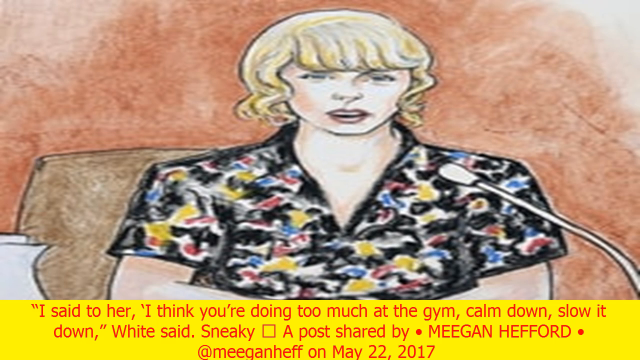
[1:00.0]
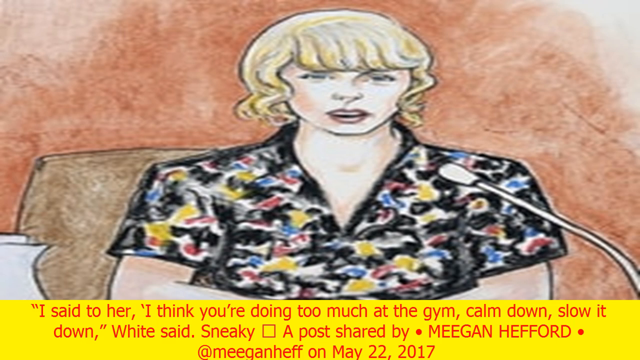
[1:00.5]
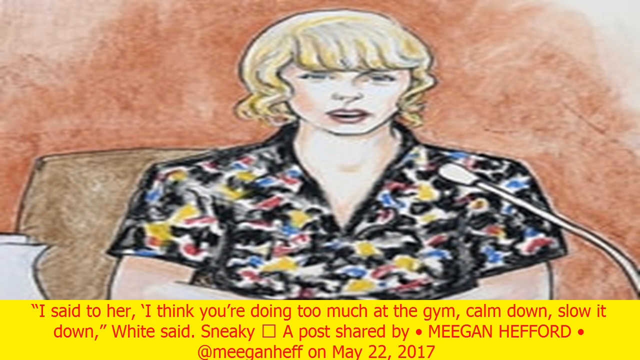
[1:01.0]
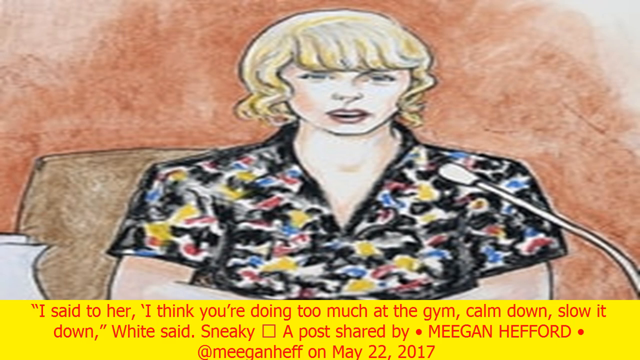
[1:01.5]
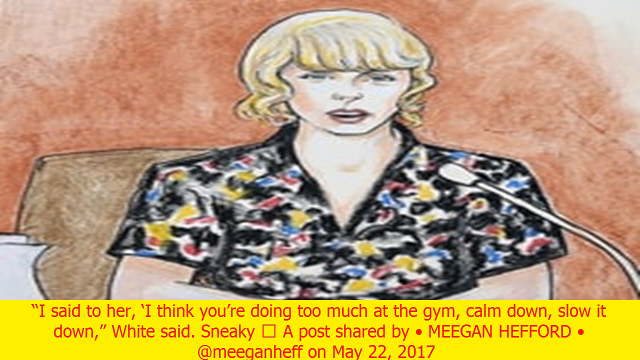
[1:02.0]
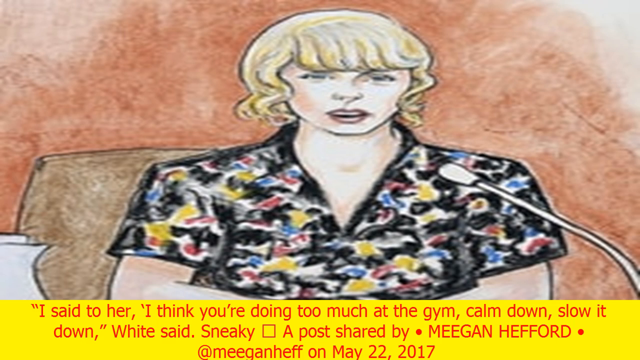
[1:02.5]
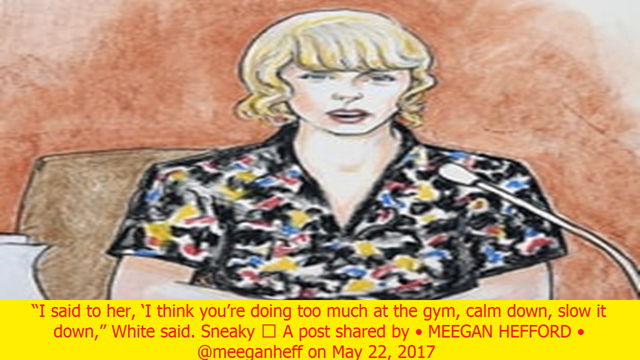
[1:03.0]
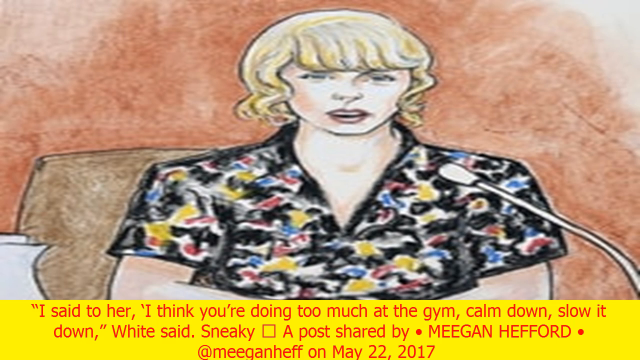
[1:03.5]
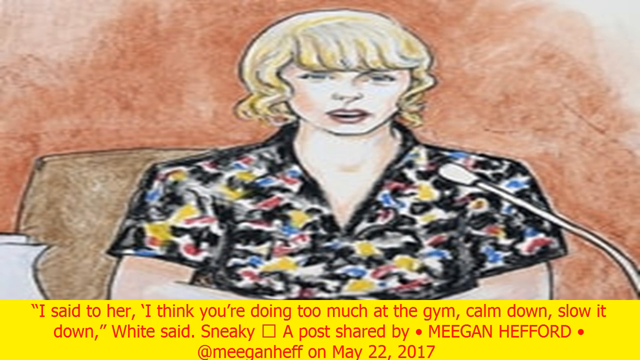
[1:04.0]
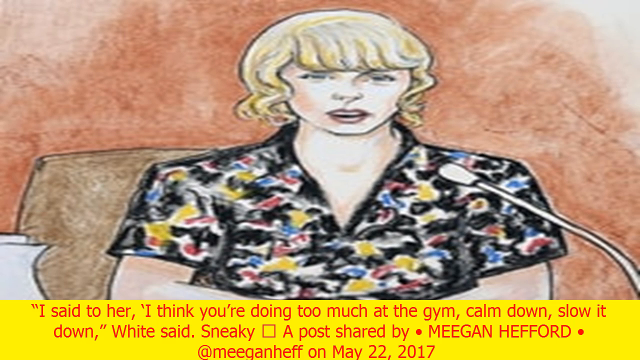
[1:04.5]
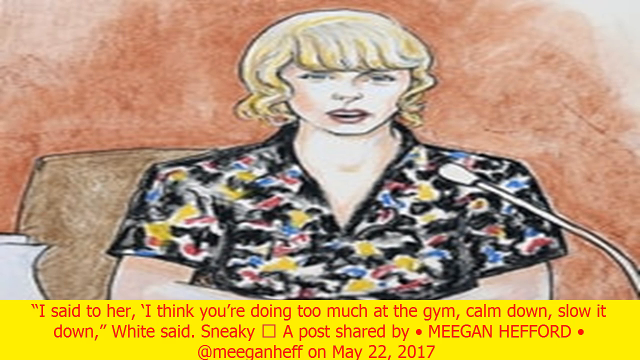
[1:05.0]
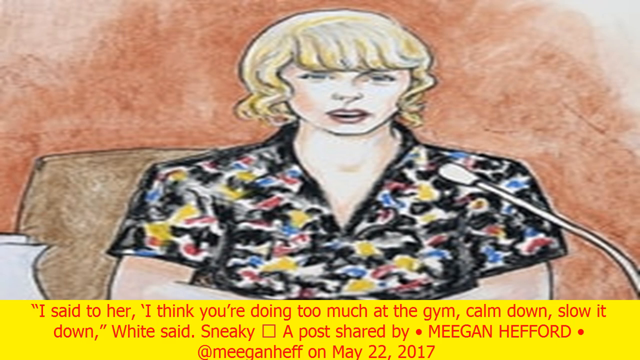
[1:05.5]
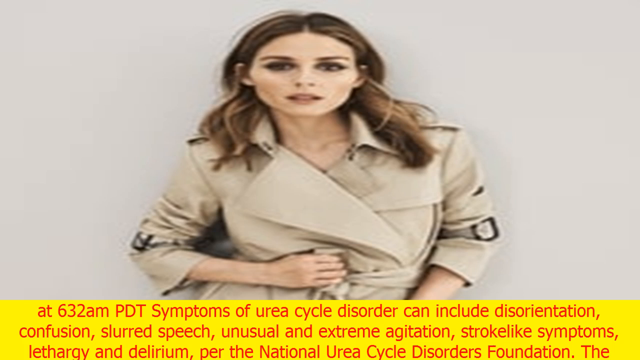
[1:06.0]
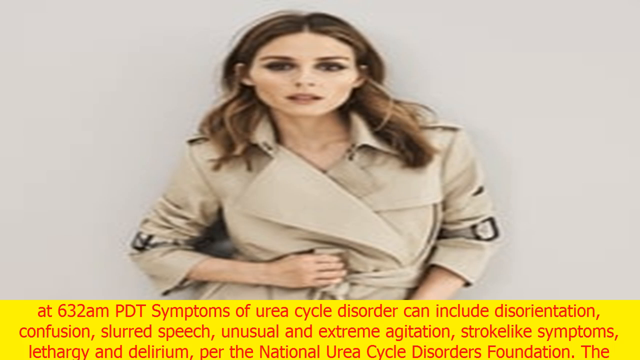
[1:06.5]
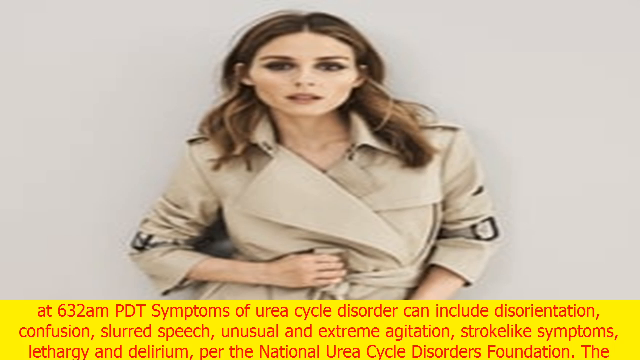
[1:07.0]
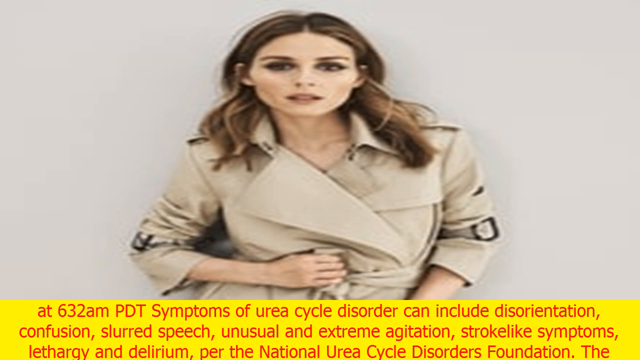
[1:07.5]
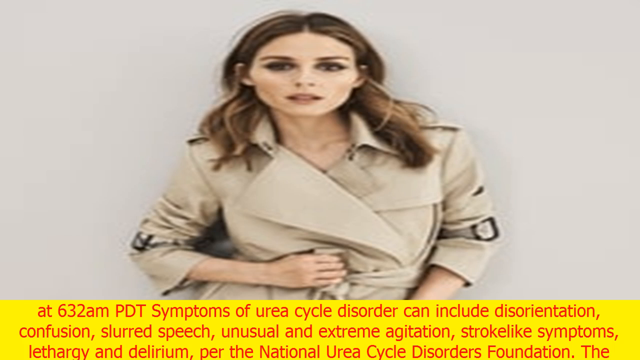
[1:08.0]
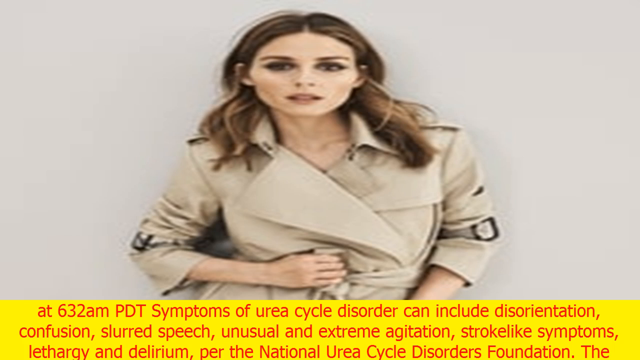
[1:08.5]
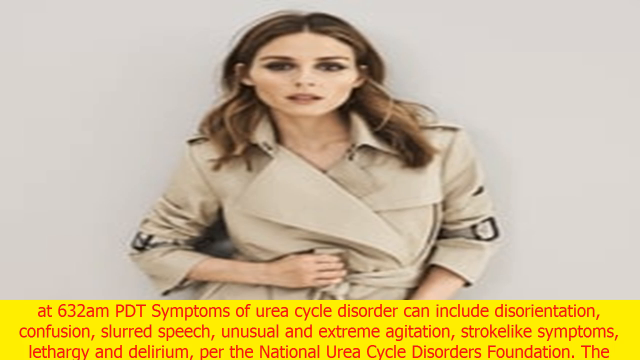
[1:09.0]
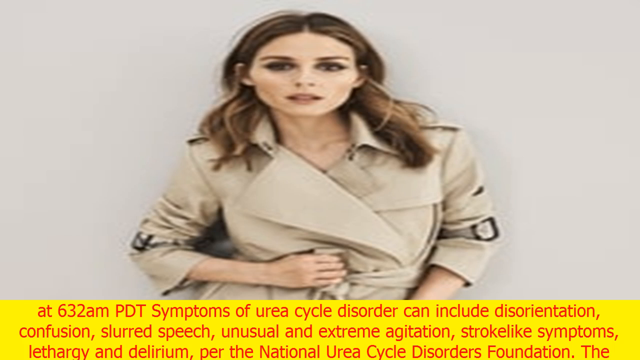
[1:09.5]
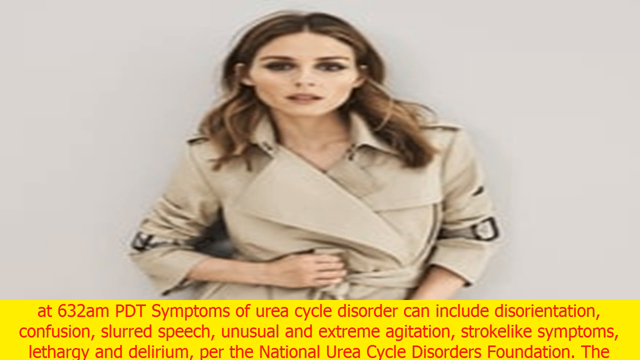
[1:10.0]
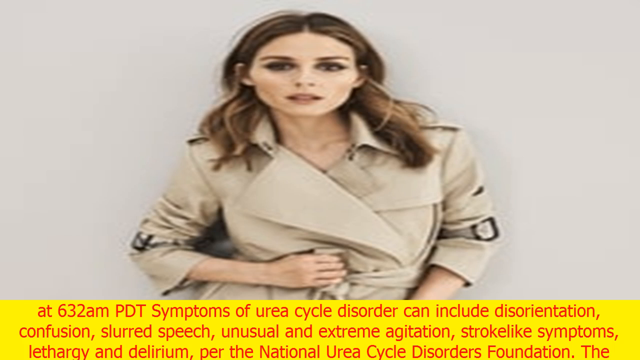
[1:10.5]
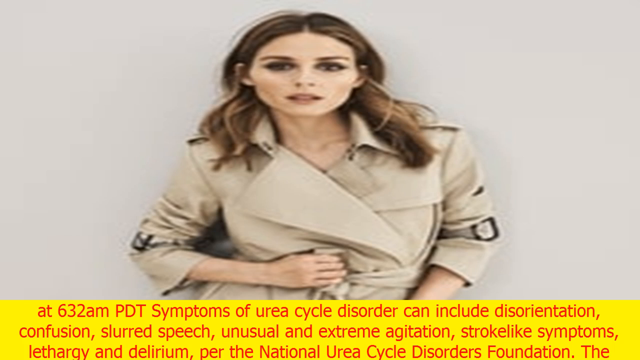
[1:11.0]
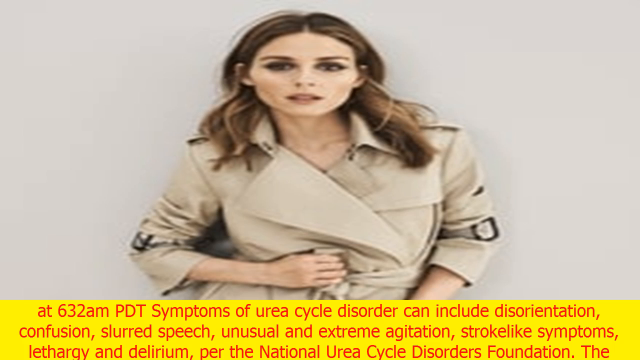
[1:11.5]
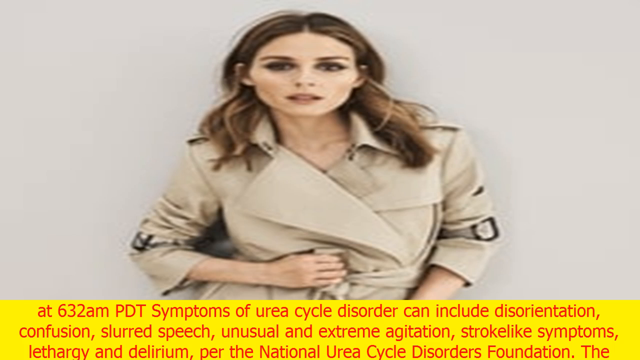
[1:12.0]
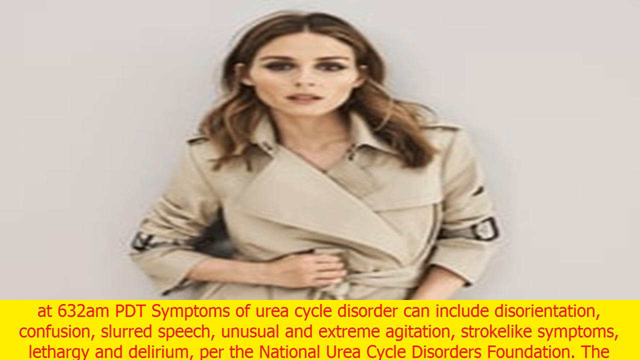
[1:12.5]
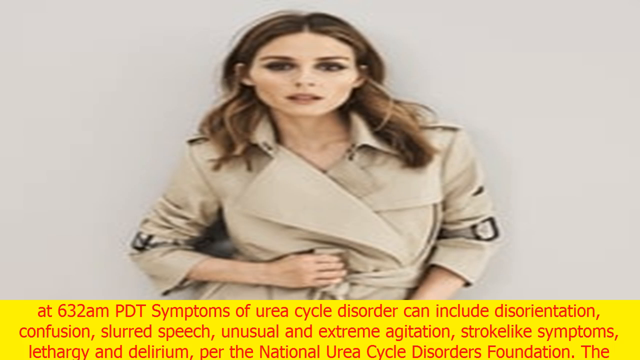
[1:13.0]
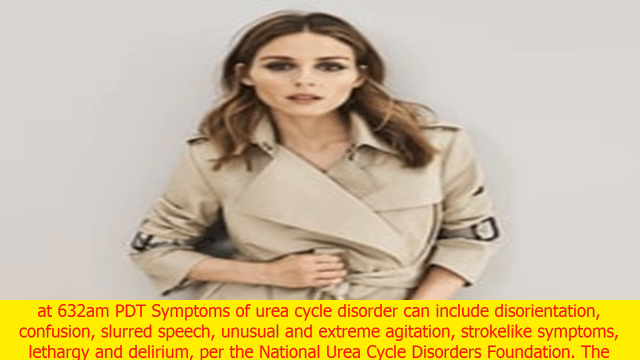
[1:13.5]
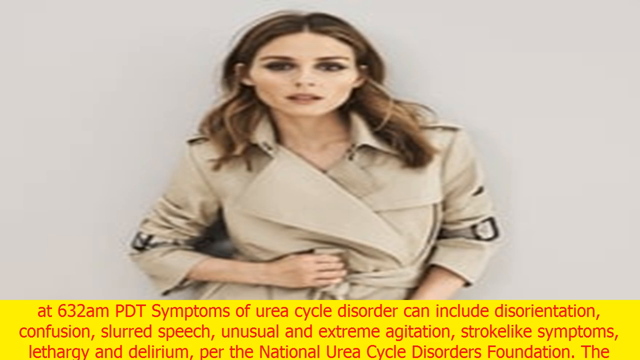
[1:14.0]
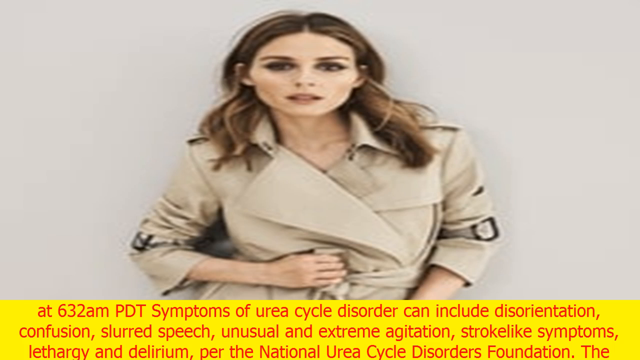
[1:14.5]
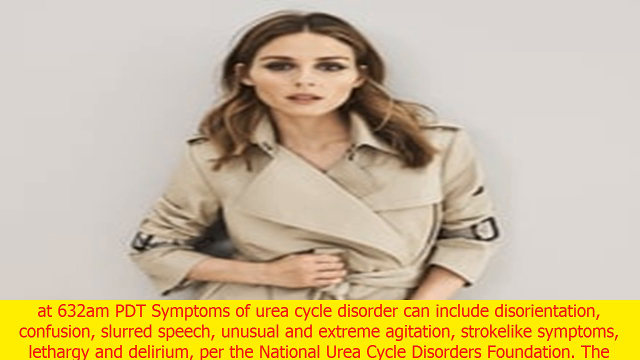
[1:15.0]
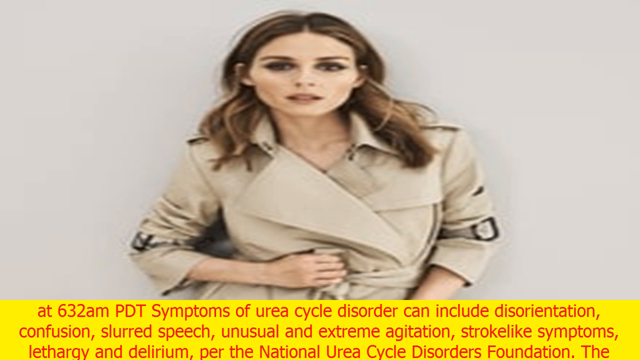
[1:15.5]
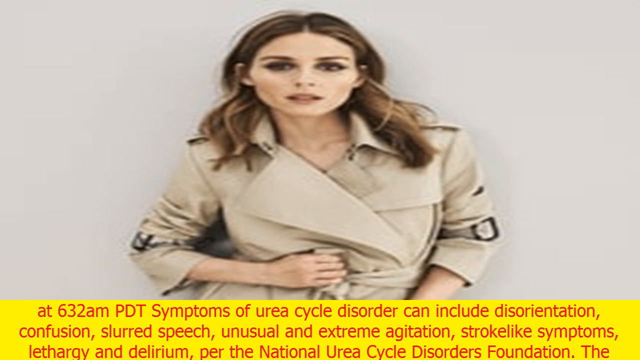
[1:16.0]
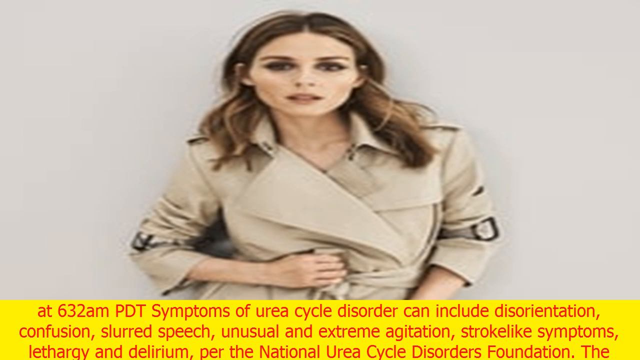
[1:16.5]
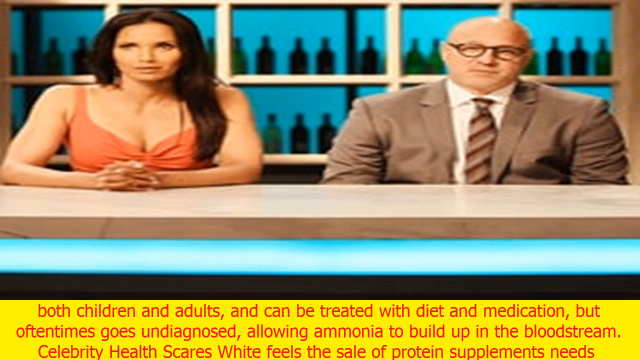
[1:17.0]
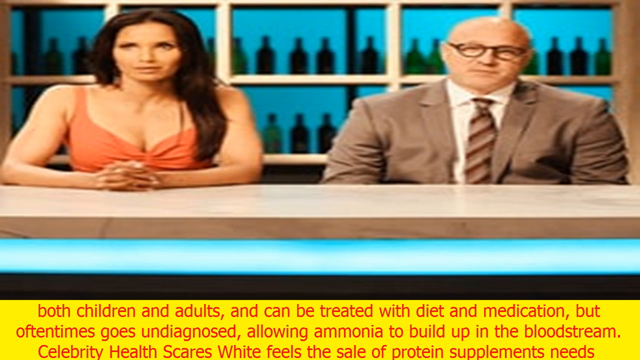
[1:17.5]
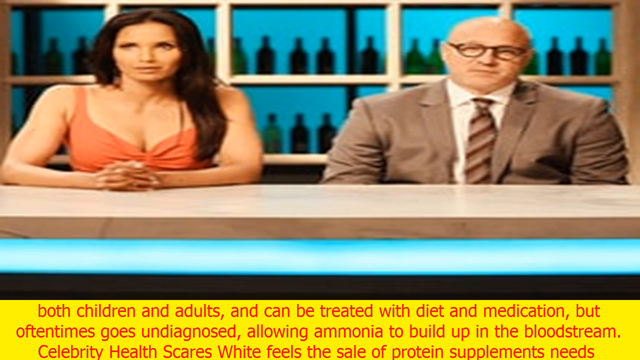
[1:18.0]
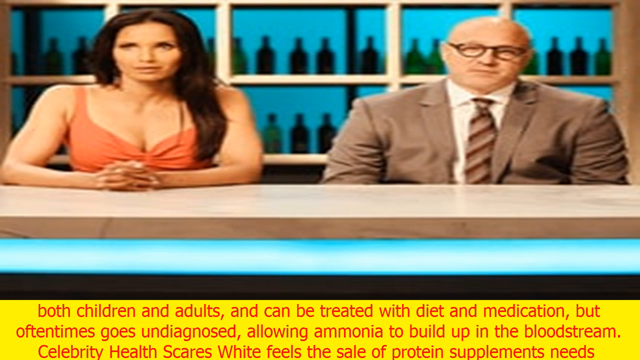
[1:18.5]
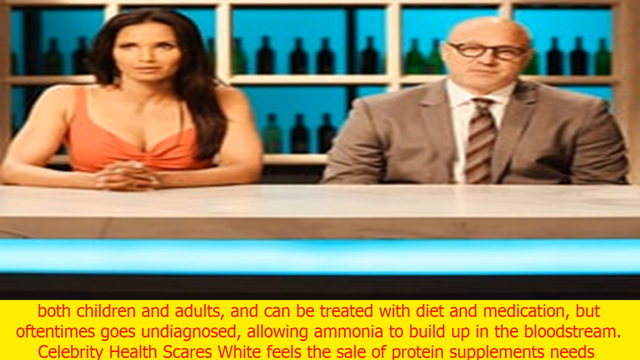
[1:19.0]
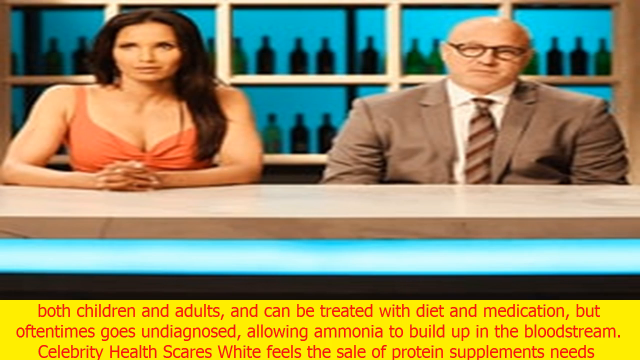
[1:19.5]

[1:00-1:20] The drawing of the blonde woman in a black shirt speaking into the microphone continues, with the superimposed text "I say to her, I think you're doing too much at the gym, calm down, slow it down." Next comes an image of a model, another woman or a television character, with superimposed text describing the symptoms of the syndrome, which can include disorientation, confusion, unusual agitation and symptoms of heart attack. Finally, an image shows two people, a man and a woman, sitting at a table, while the text adds that both children and adults can be treated with diet and medication, but that sometimes the condition is not diagnosed and can lead to death.